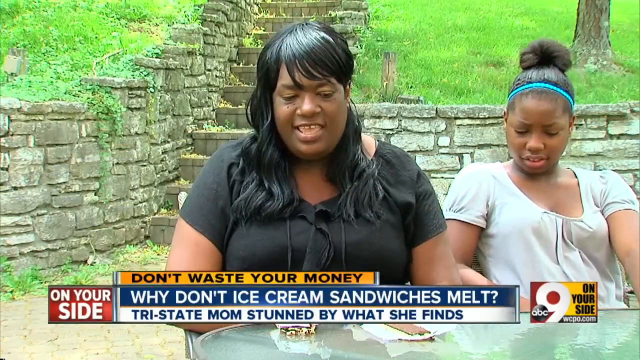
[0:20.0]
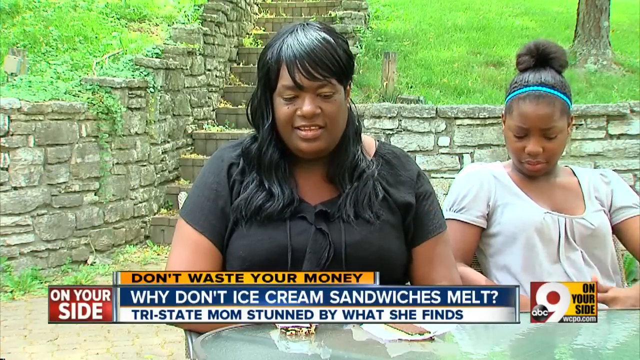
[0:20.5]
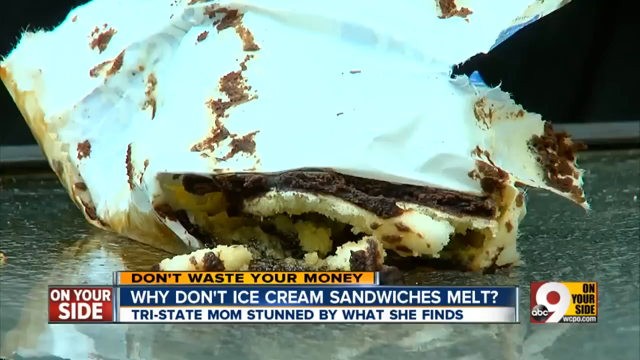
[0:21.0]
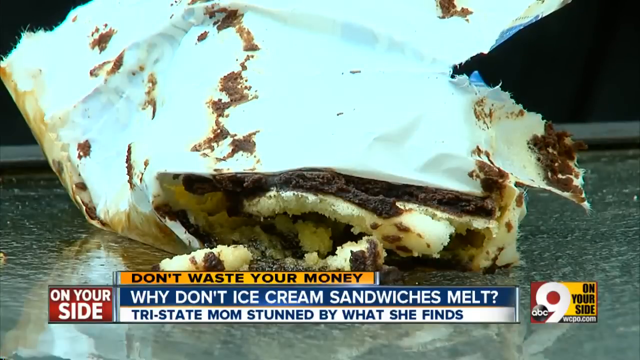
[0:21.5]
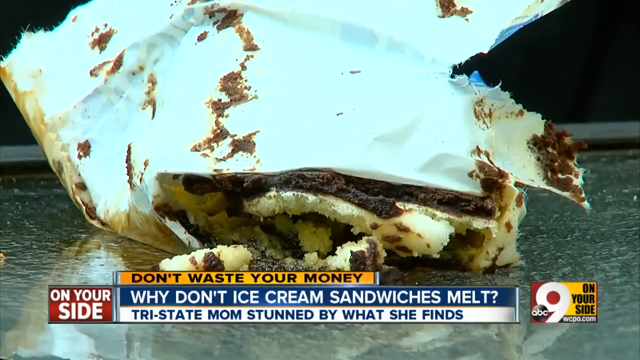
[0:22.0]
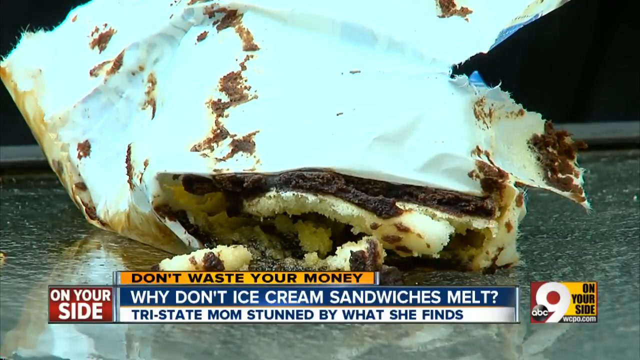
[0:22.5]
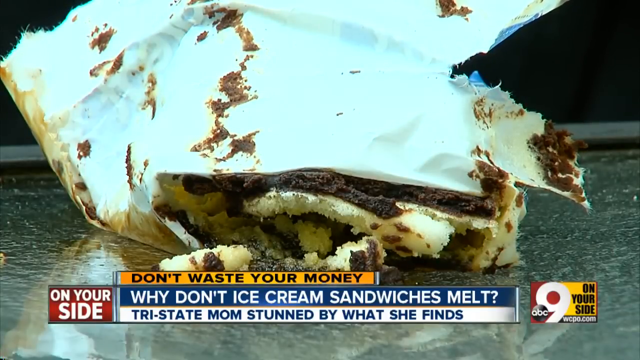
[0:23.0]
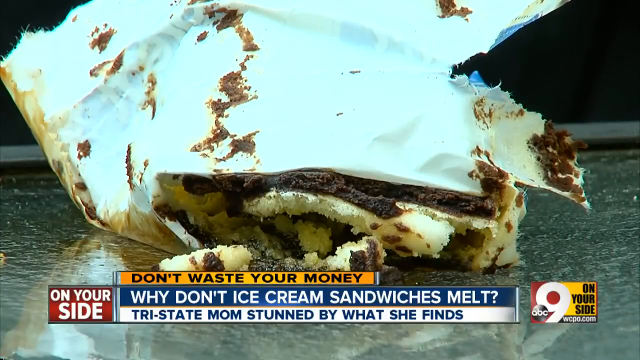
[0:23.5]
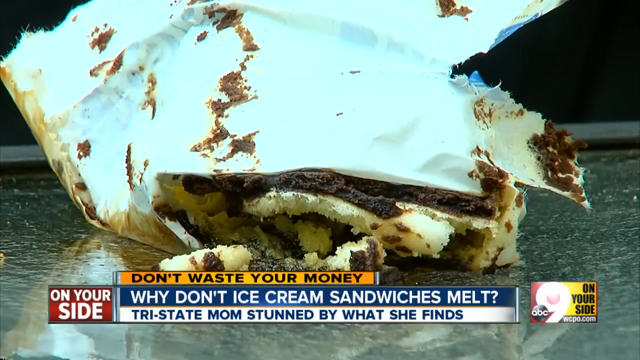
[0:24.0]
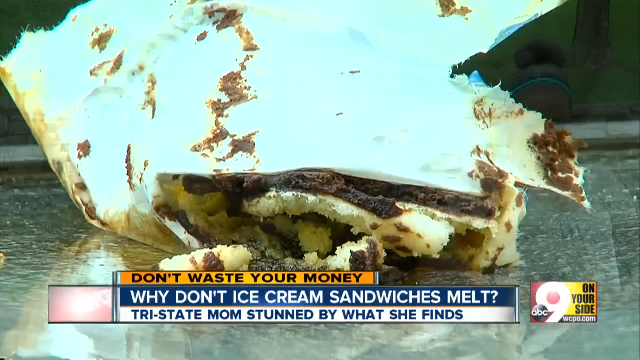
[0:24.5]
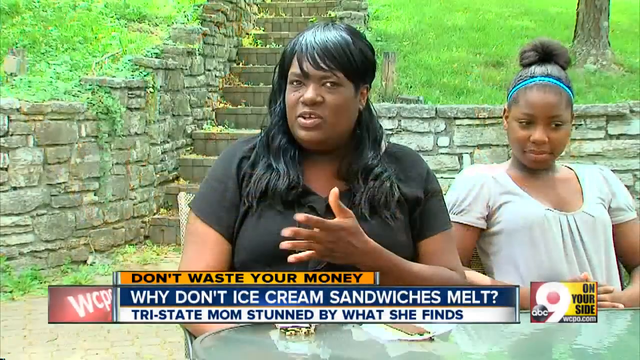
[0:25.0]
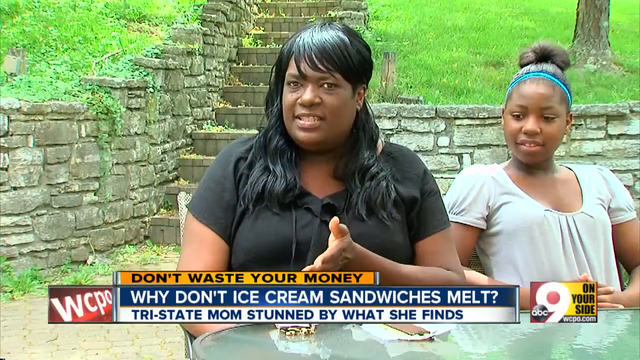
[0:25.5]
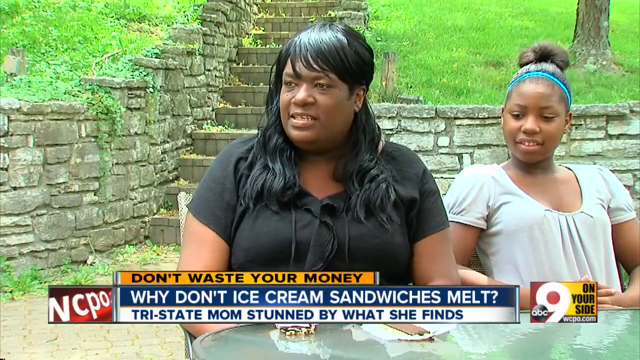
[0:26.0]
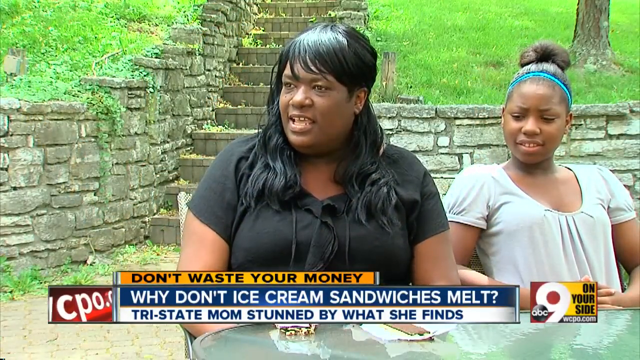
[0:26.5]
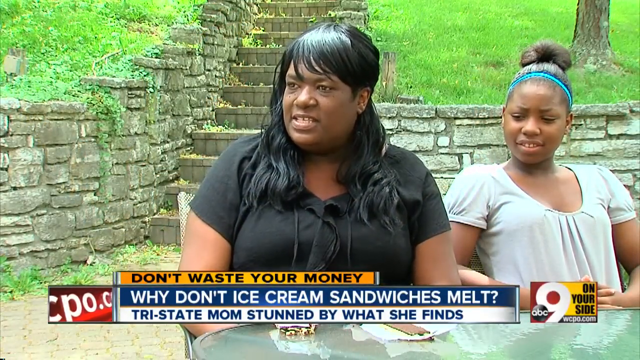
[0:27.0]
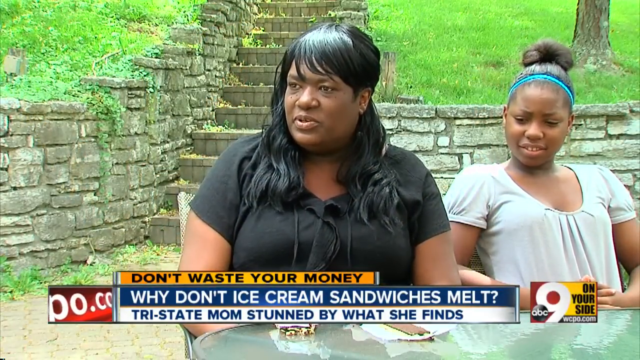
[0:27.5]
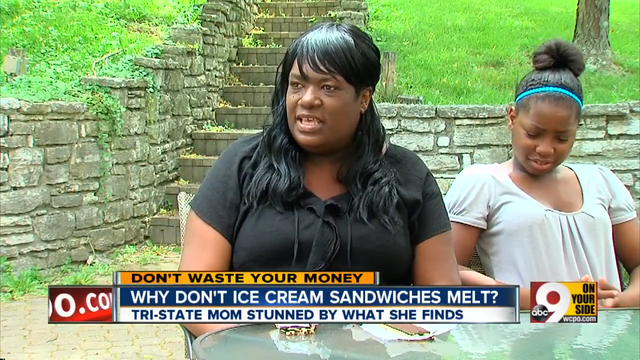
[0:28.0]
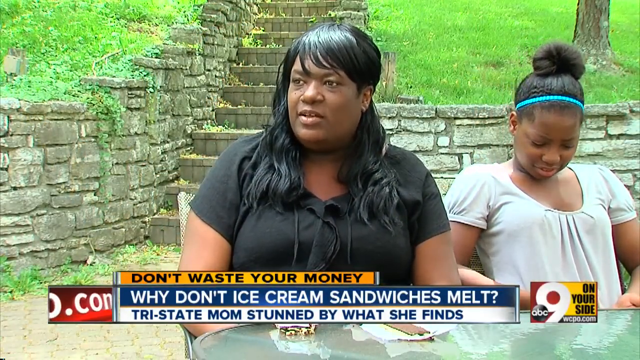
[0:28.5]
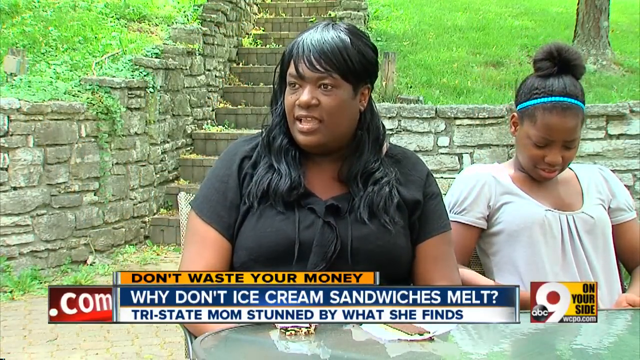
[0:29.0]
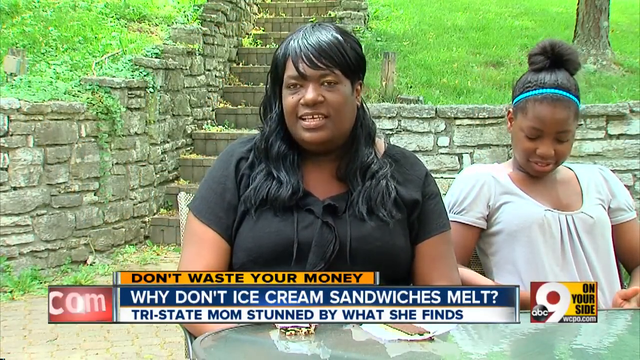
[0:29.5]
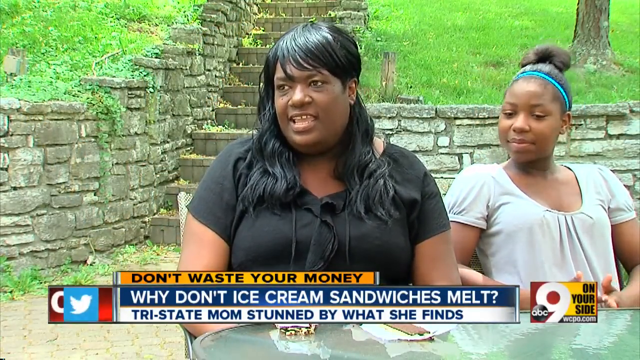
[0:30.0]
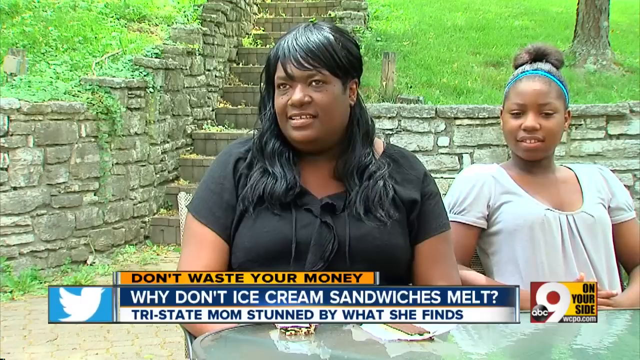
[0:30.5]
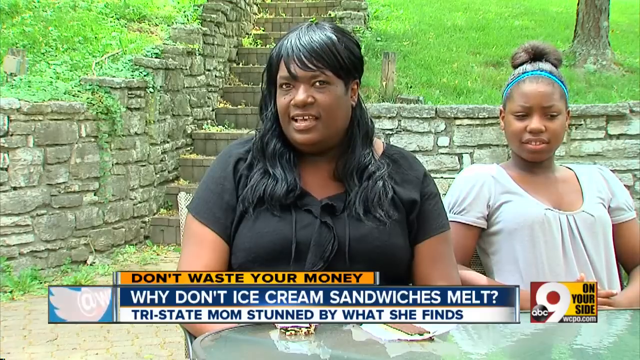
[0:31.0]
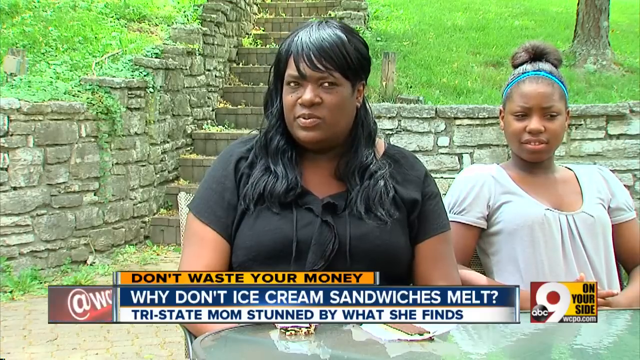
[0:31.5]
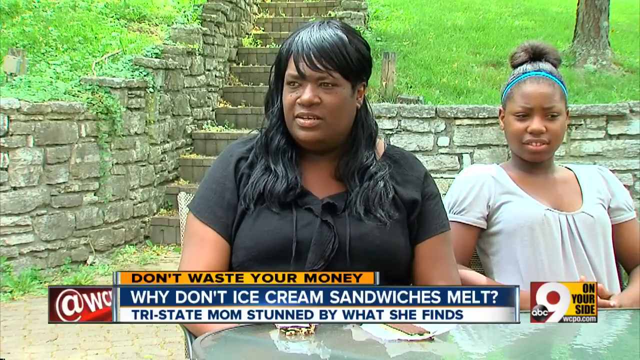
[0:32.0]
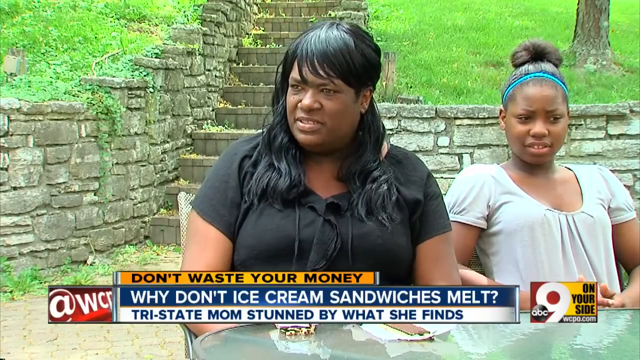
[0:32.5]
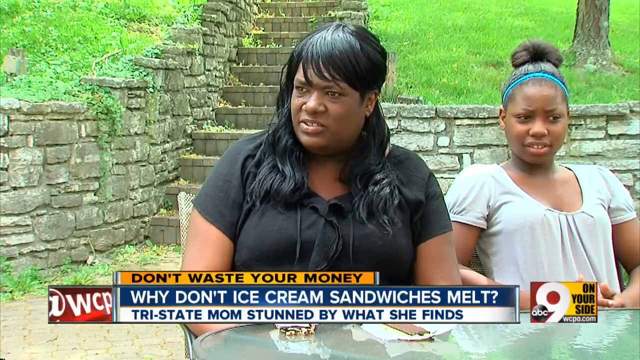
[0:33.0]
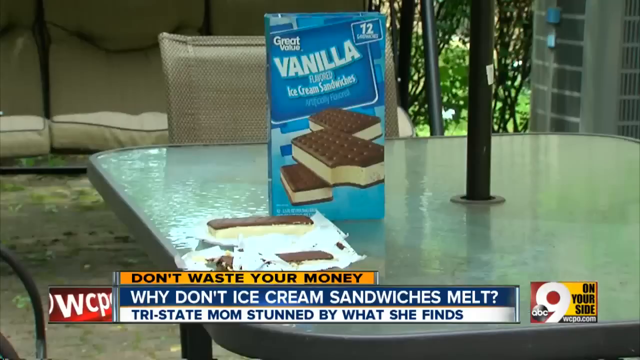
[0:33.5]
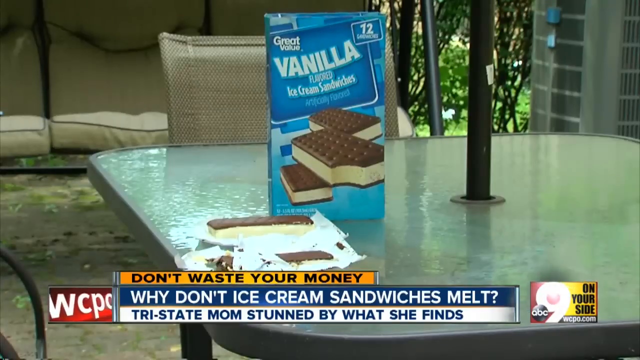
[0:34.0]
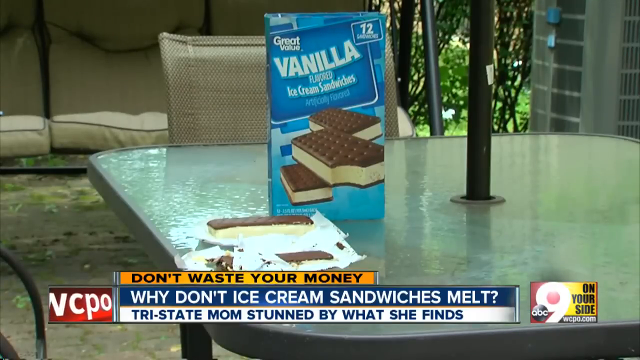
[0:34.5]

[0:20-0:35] An African American woman and an African American girl sit on a bench outside in what looks like a park-like environment, with green grass and gray stone stairs behind them. The woman wears a black shirt with what looks like strings hanging down the front. She appears to be talking to a news crew and being interviewed, moving her right hand around as she speaks. The girl, sitting to the left of the woman in a white shirt, does not talk and smiles at what the woman is saying. In the lower portion of the screen a graphic reads "Don't Waste Your Money," below that "Why Don't Ice Cream Sandwiches Melt?" and below that "Tri-State Mom Stunned by What She Saw." To the right is a small graphic reading "ABC9"; to the left one reads "WCPO.com," followed by a Twitter icon.